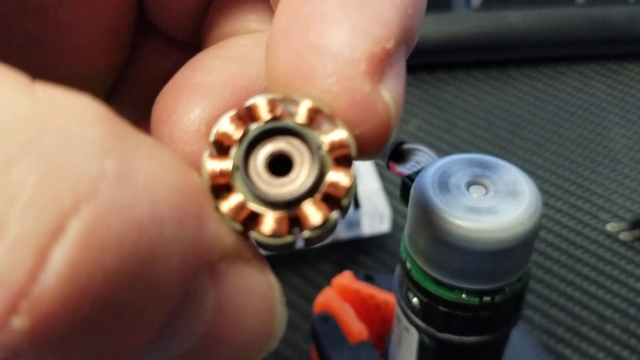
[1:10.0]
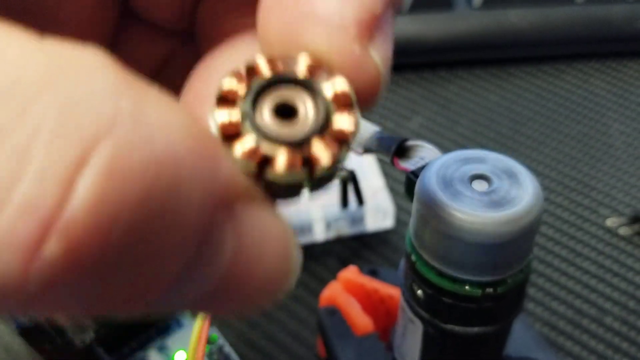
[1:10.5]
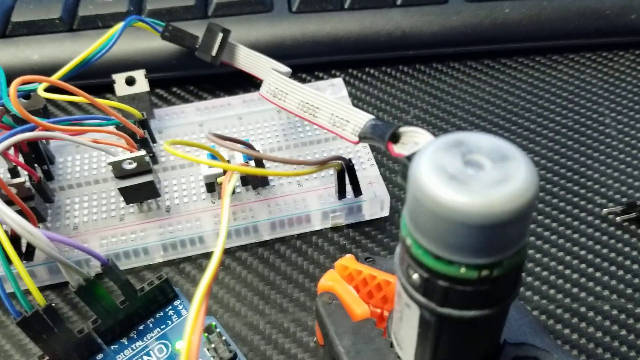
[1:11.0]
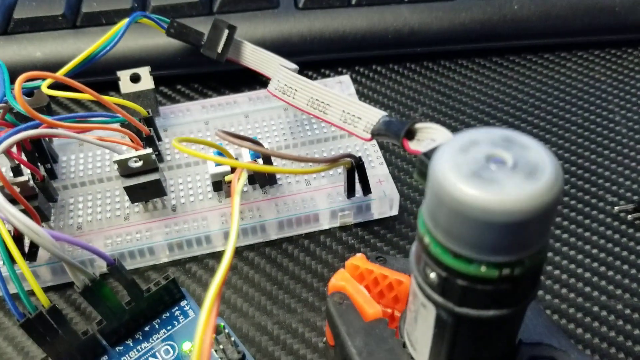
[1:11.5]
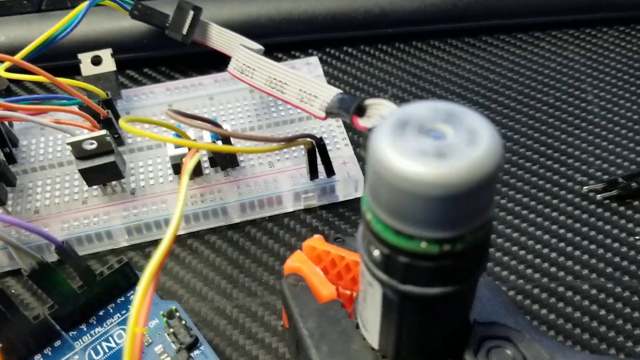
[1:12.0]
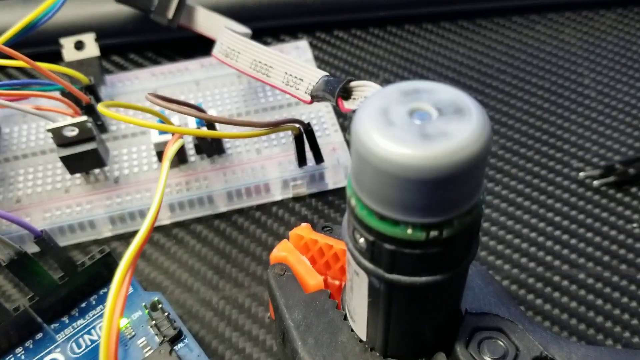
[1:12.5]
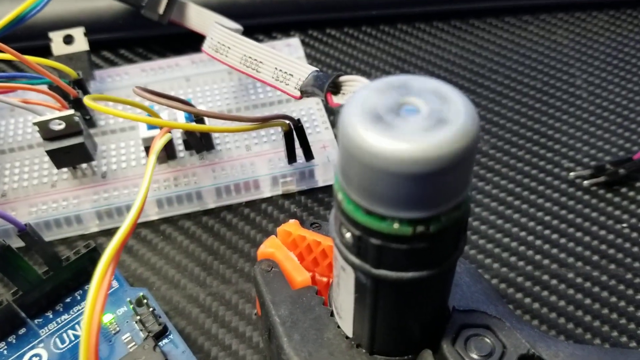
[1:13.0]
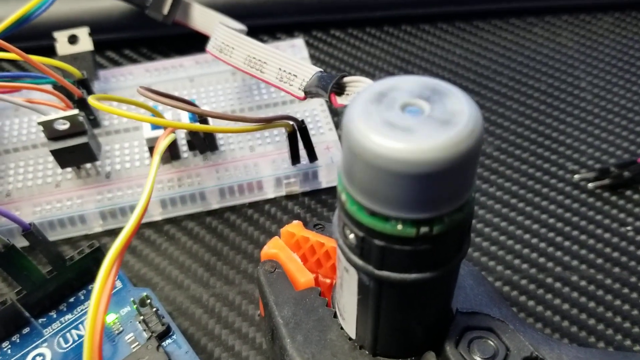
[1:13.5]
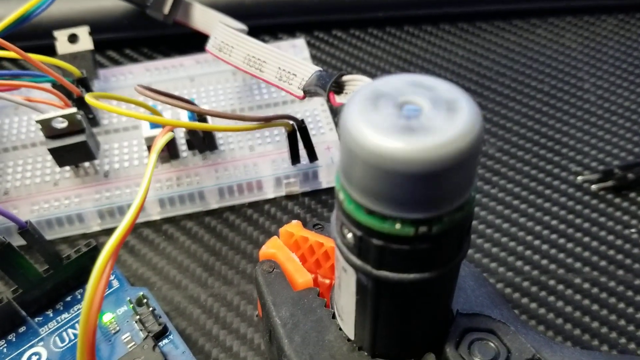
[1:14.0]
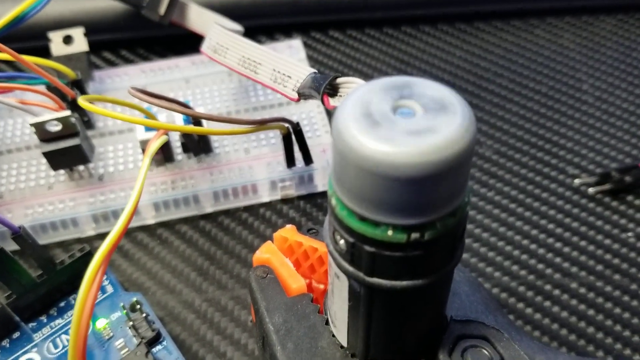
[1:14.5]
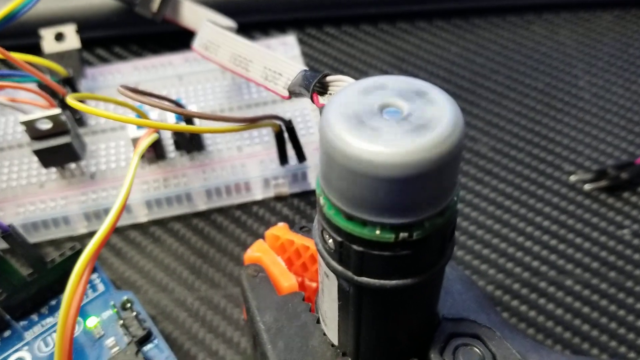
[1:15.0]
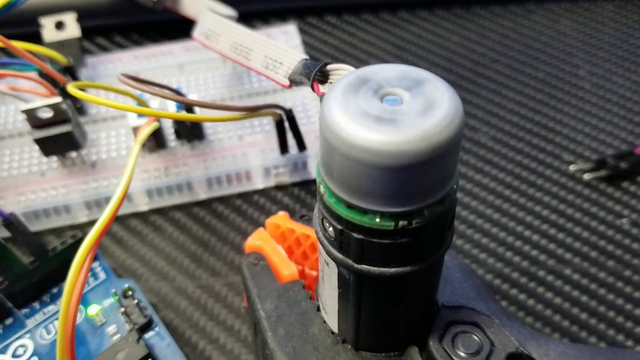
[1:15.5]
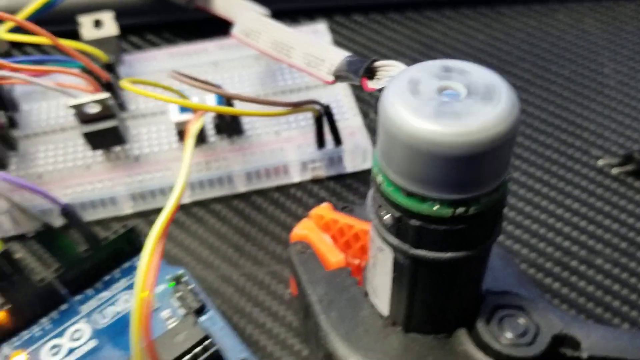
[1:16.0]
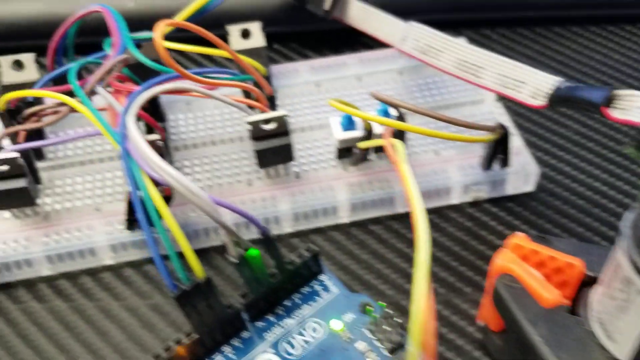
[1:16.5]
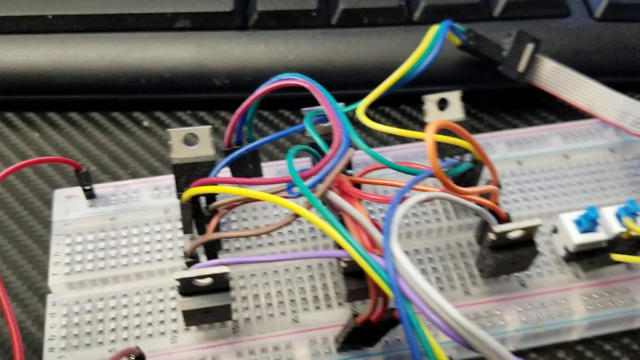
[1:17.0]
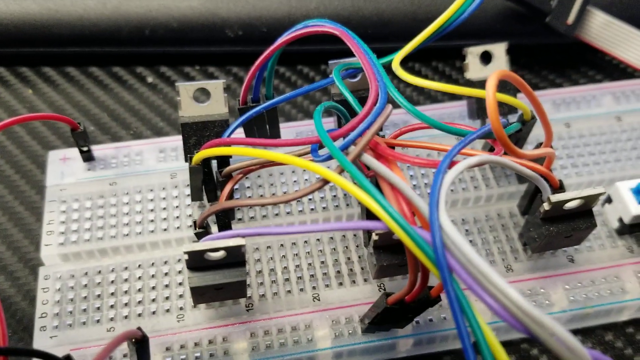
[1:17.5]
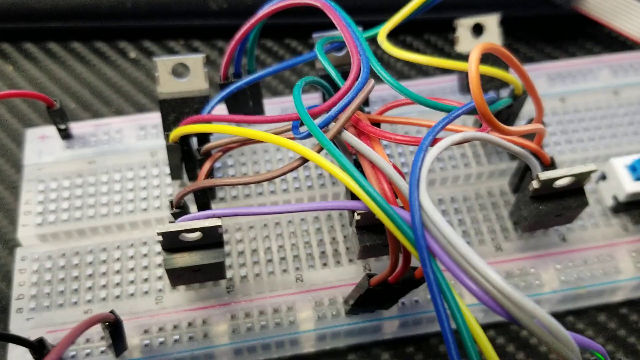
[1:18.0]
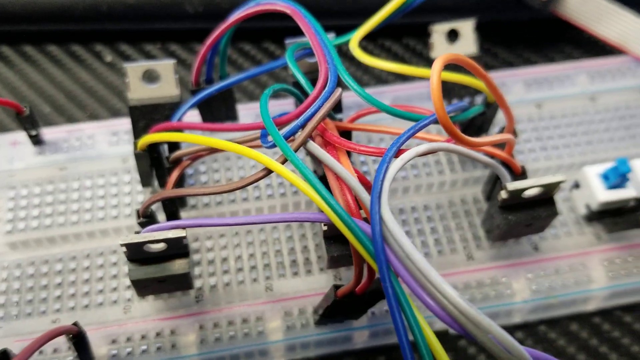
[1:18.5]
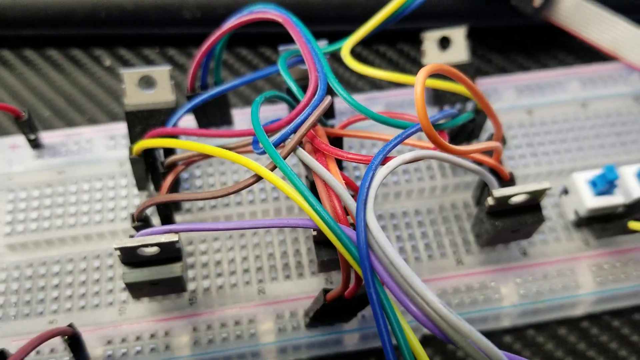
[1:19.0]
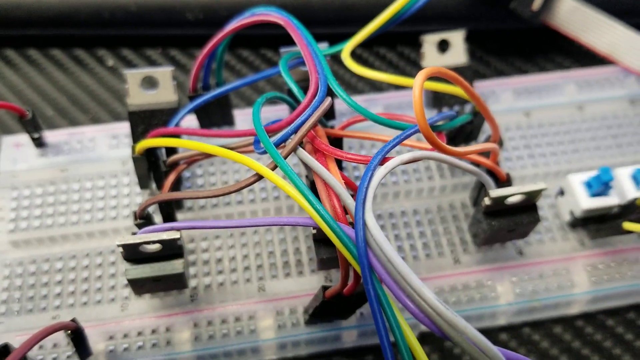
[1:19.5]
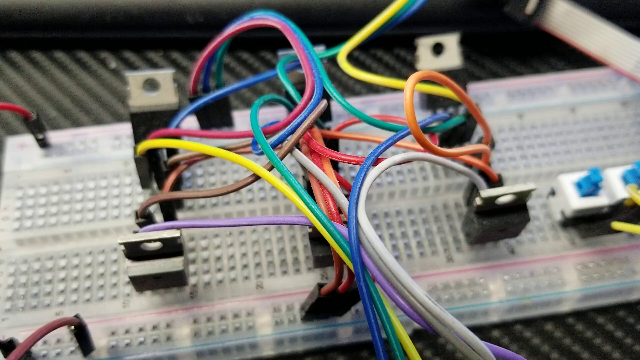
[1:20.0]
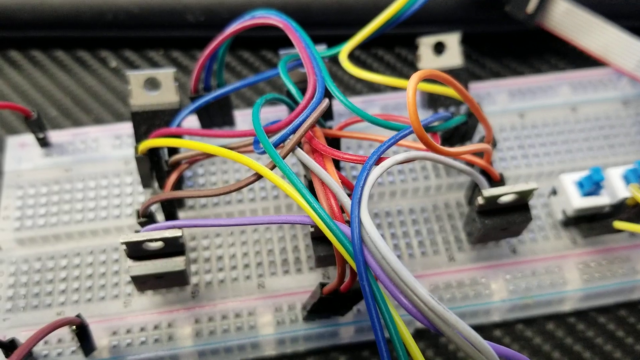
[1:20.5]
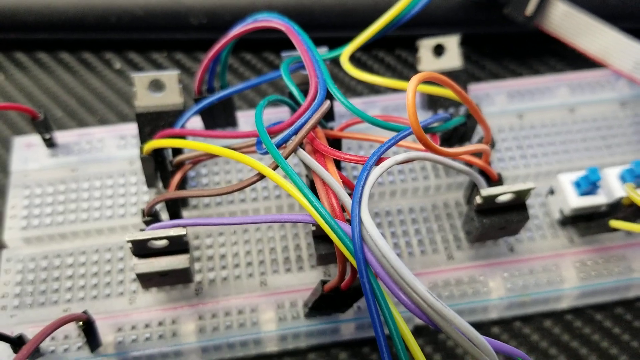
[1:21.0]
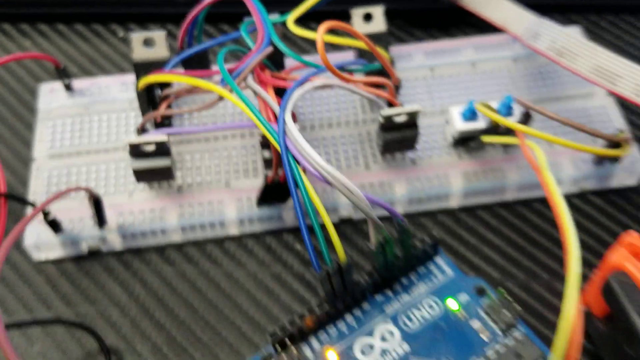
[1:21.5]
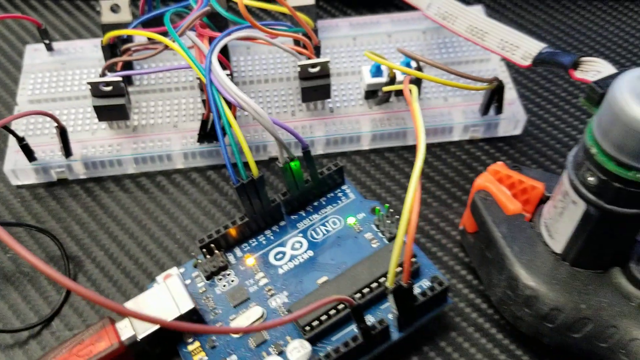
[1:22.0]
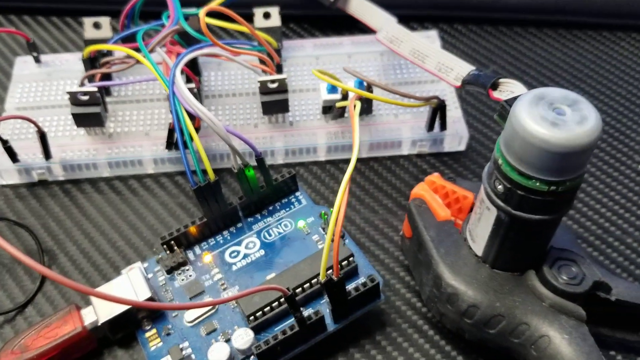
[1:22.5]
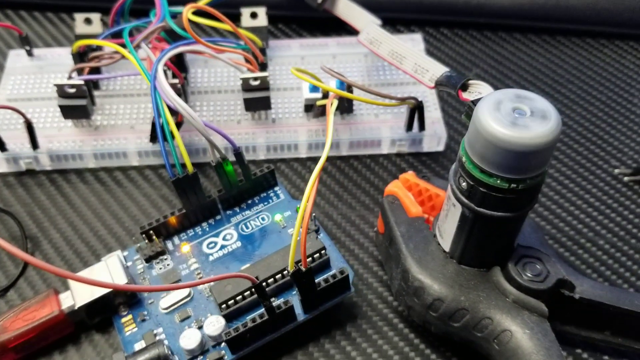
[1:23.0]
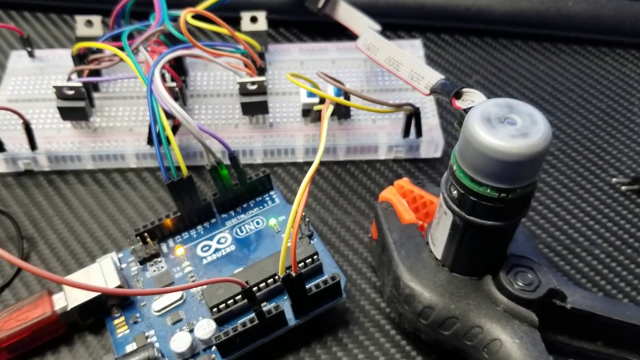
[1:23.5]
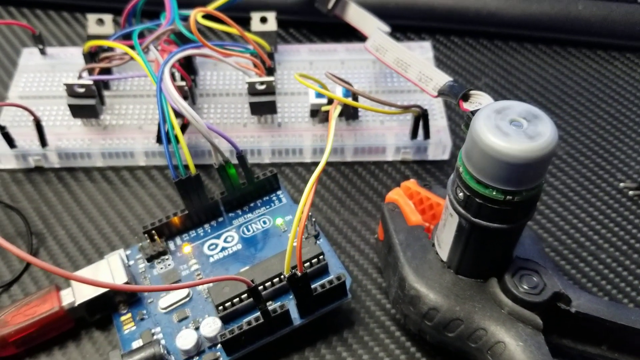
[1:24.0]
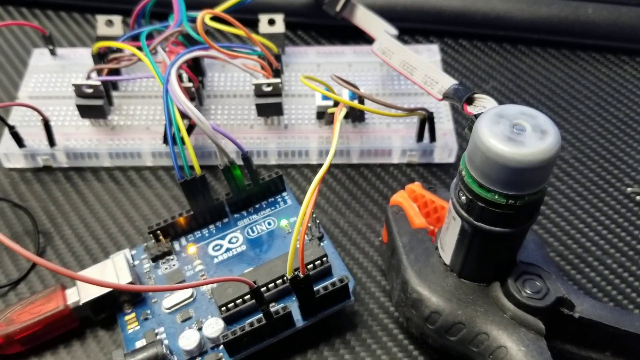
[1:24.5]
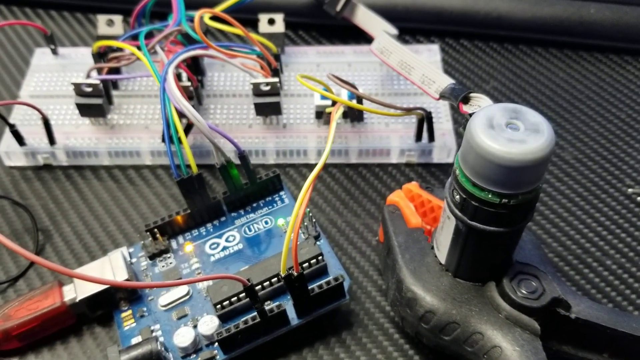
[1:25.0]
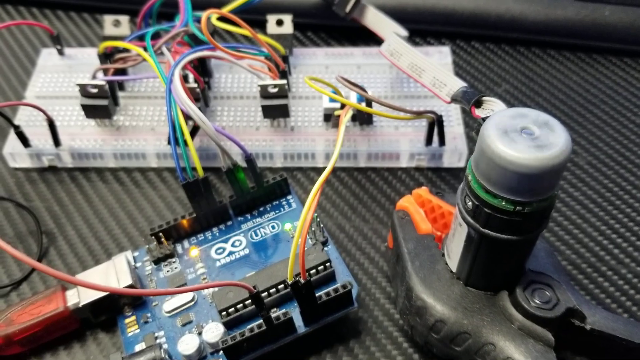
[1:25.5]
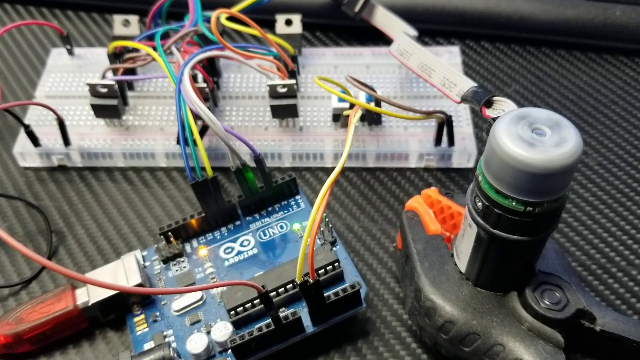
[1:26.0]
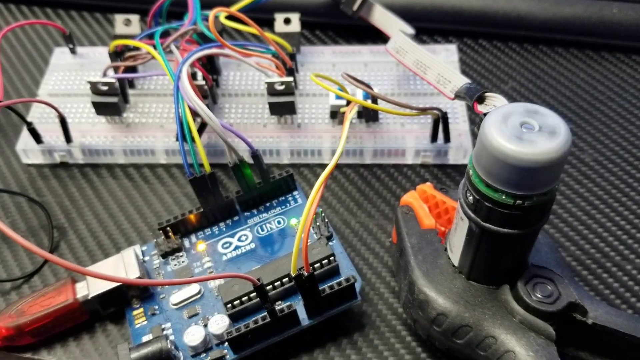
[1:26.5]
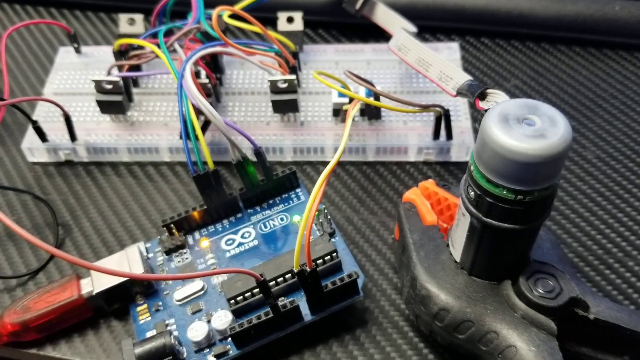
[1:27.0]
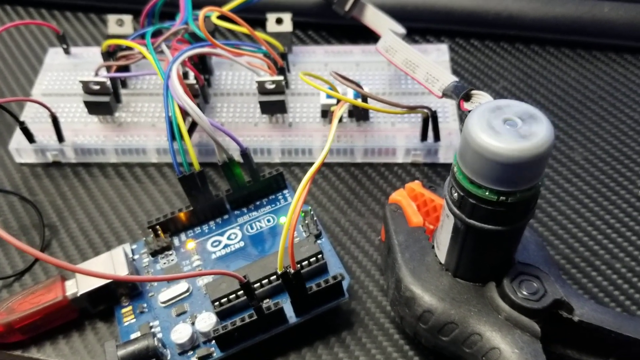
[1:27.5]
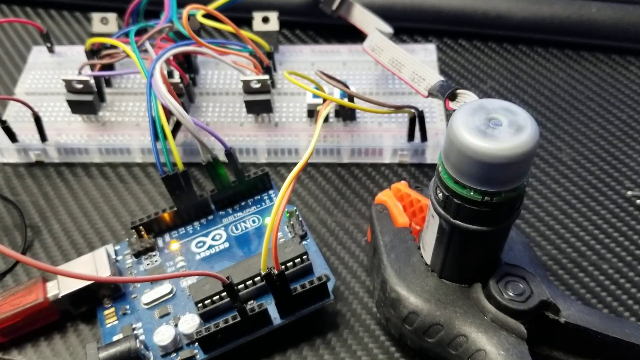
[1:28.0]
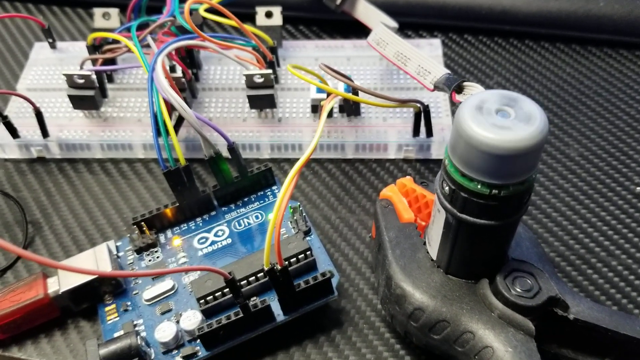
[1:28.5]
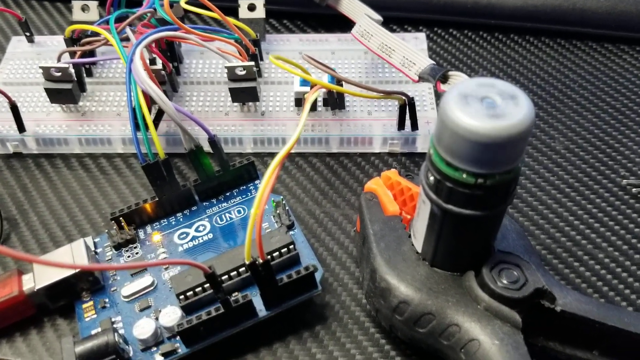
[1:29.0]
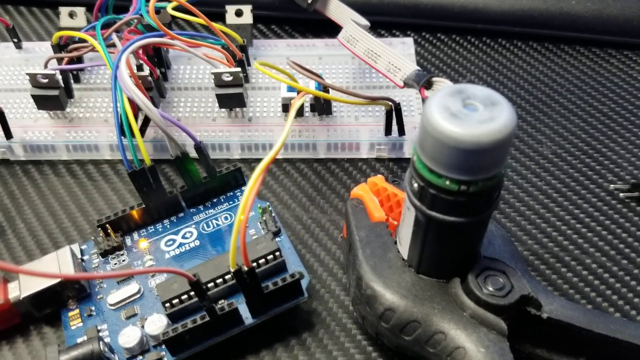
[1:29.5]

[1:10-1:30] A hand holds a circular widget and shows it prominently to the camera. The hand then moves out of the way to display various electronics strewn about on a black table with a textured surface. At the top of the shot is a black keyboard. On the bottom right is a device with a rotating top: it has a black base, above that a green circuit board, and above that a white cylindrical portion spinning clockwise. The device is propped up by a pair of black pliers with an orange tip, and it appears to be connected by some white wires and a red one. The shot then moves to the breadboard, which has various wires running out of it into various other devices.